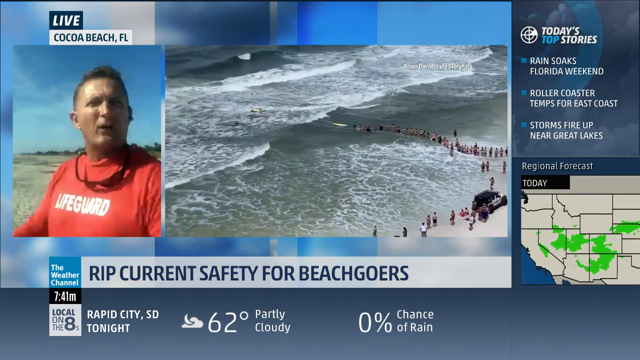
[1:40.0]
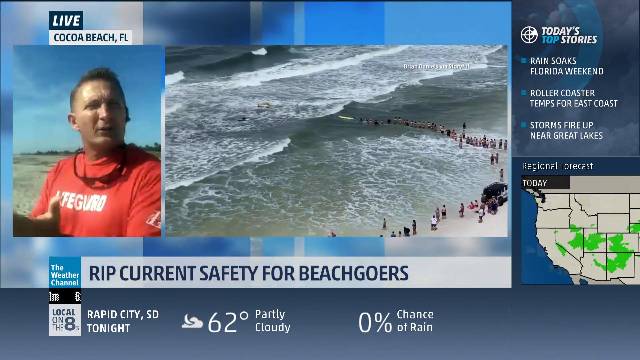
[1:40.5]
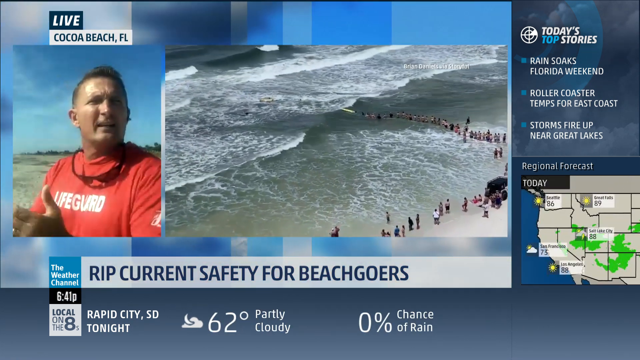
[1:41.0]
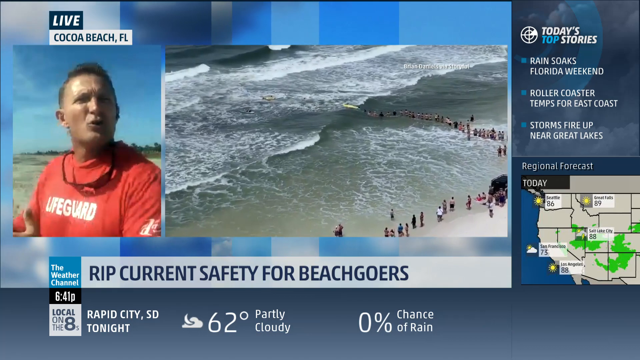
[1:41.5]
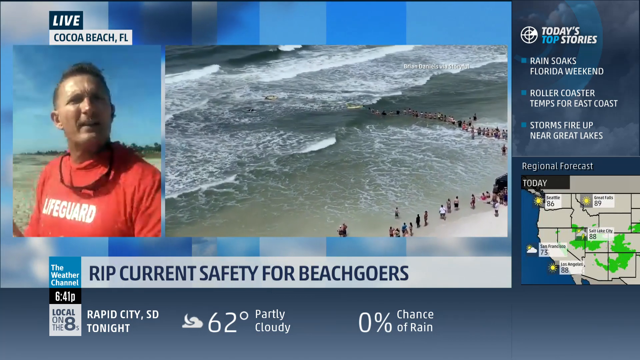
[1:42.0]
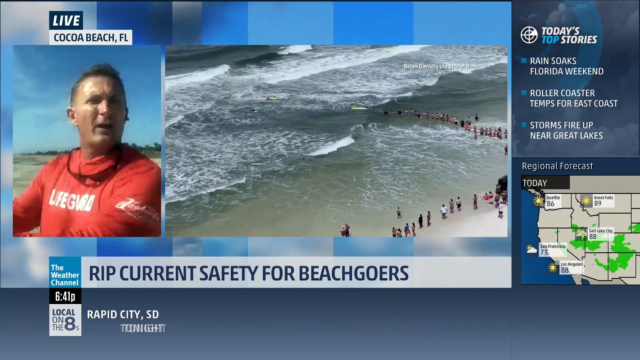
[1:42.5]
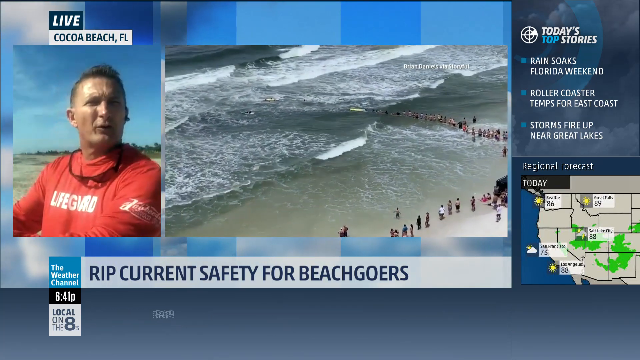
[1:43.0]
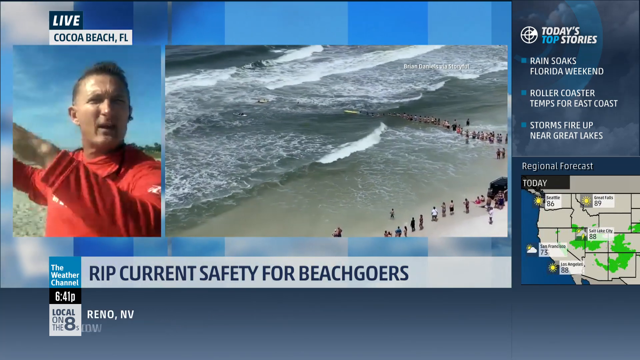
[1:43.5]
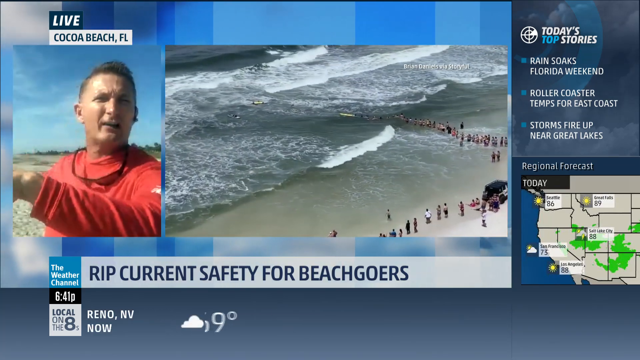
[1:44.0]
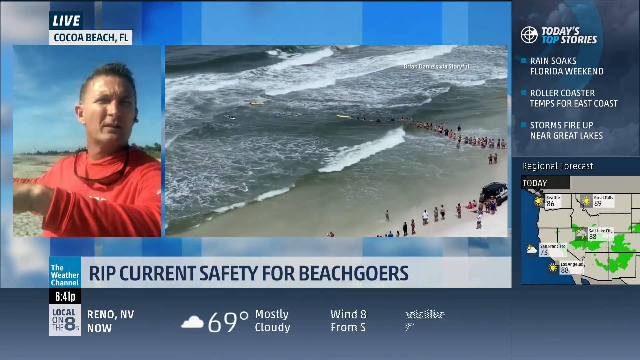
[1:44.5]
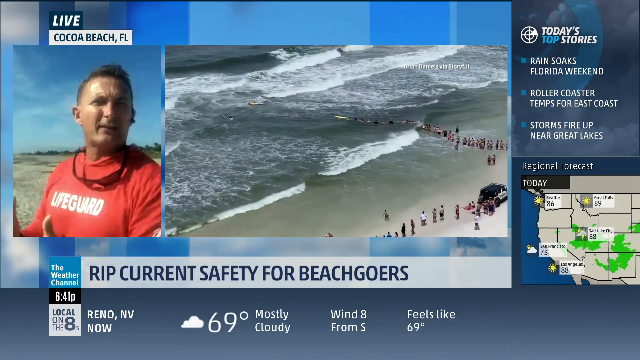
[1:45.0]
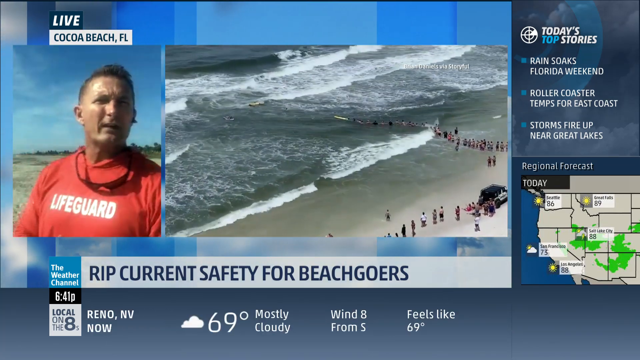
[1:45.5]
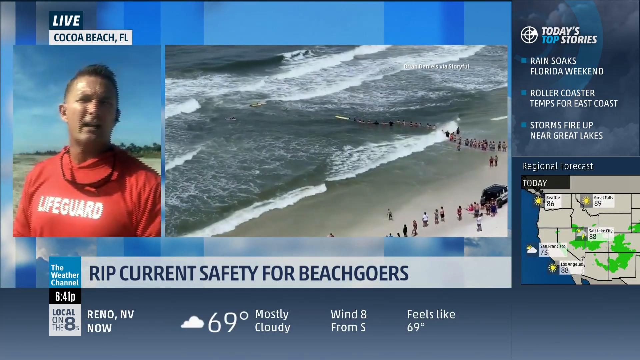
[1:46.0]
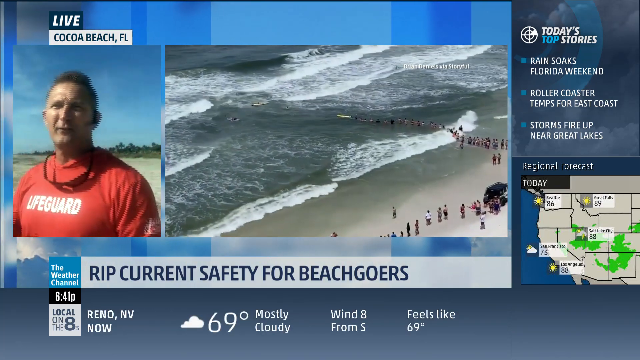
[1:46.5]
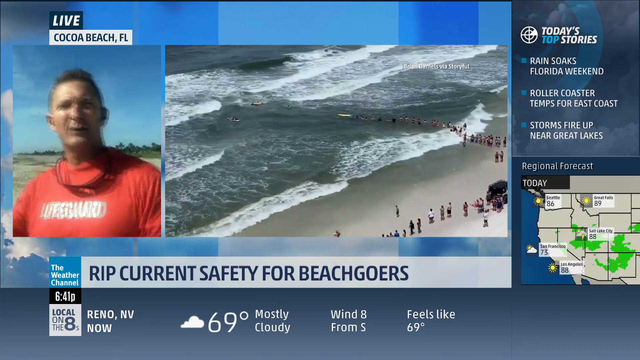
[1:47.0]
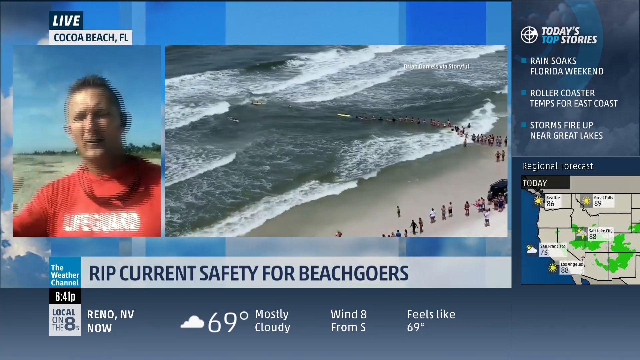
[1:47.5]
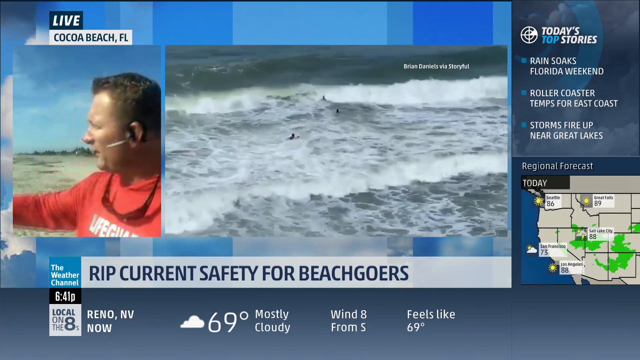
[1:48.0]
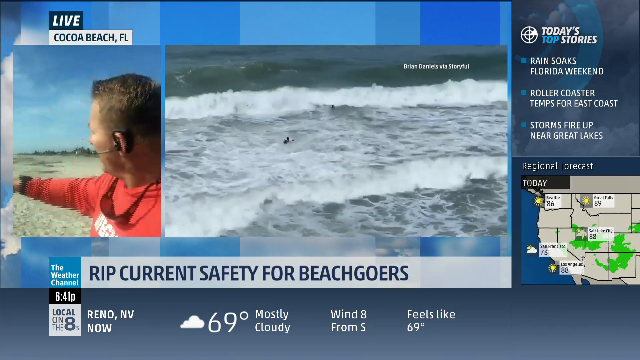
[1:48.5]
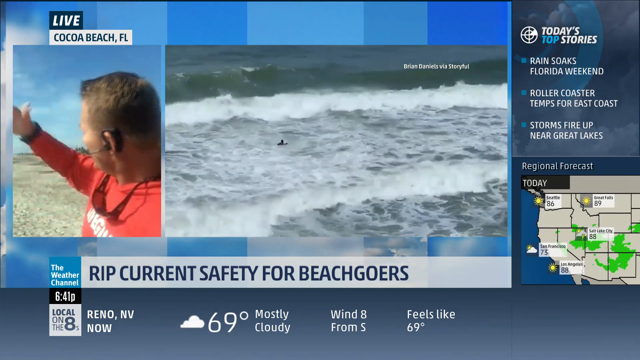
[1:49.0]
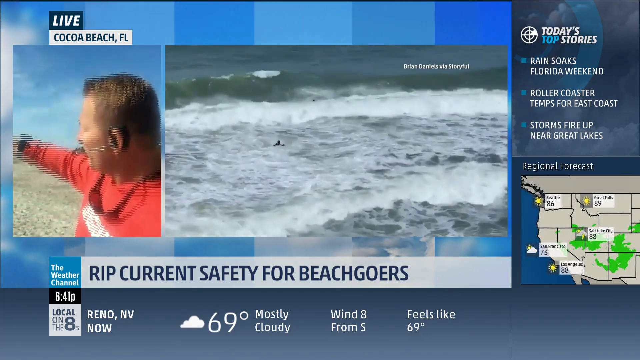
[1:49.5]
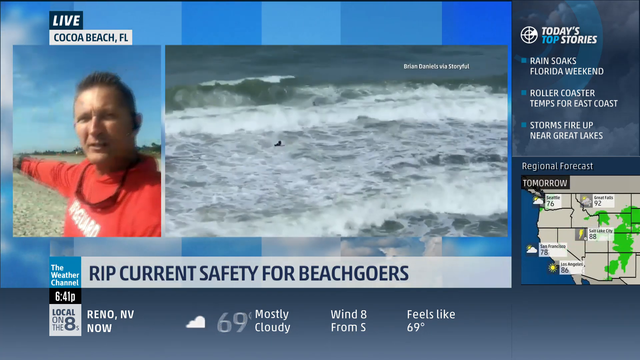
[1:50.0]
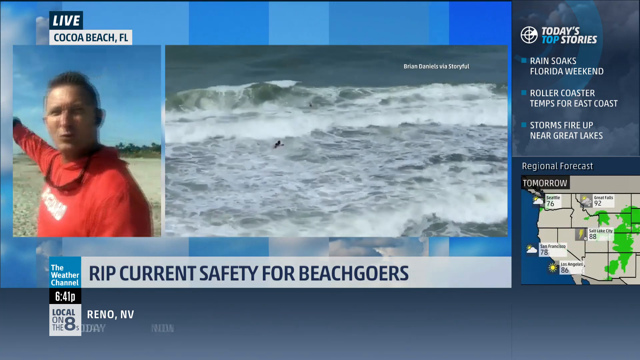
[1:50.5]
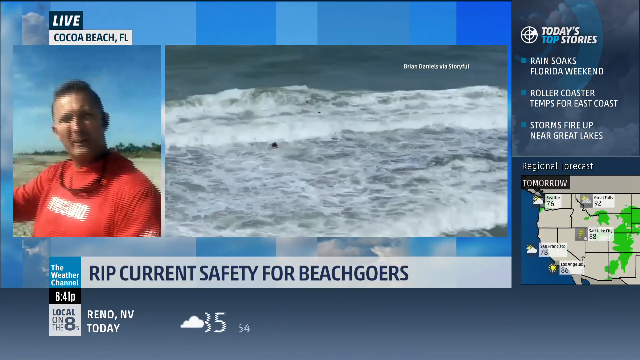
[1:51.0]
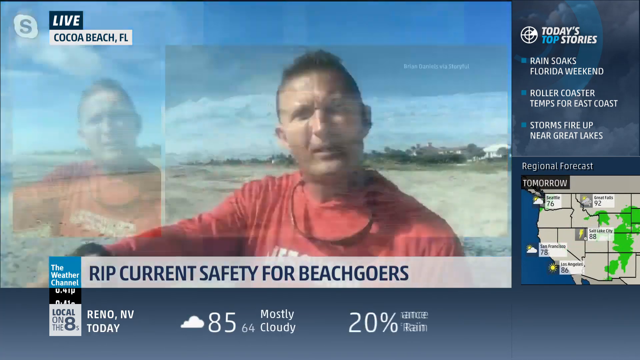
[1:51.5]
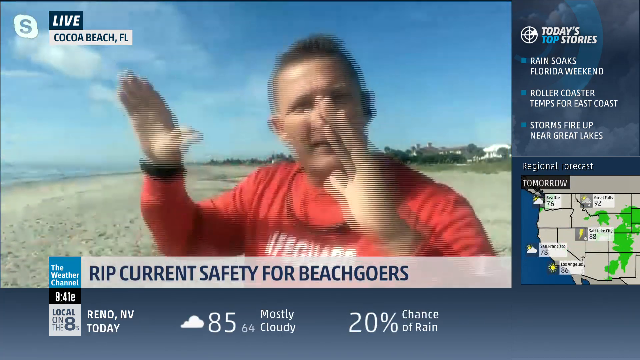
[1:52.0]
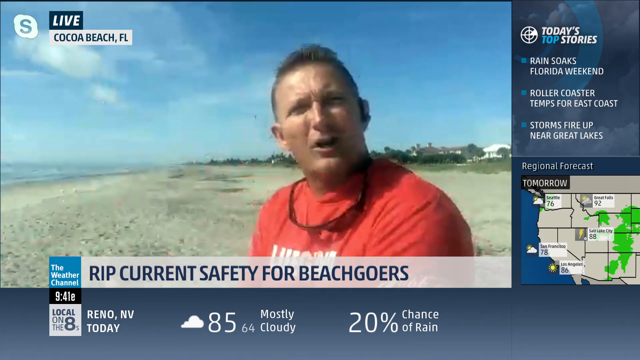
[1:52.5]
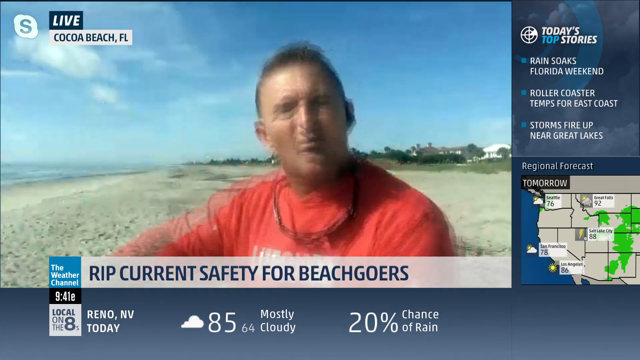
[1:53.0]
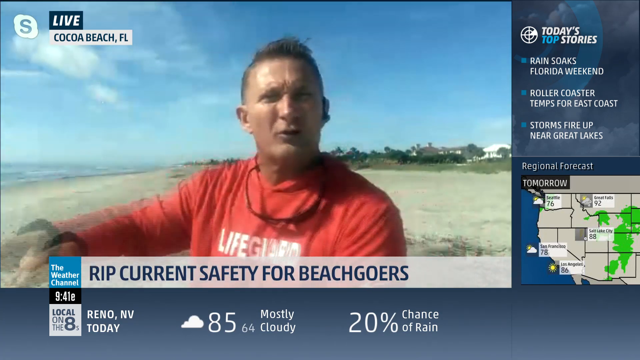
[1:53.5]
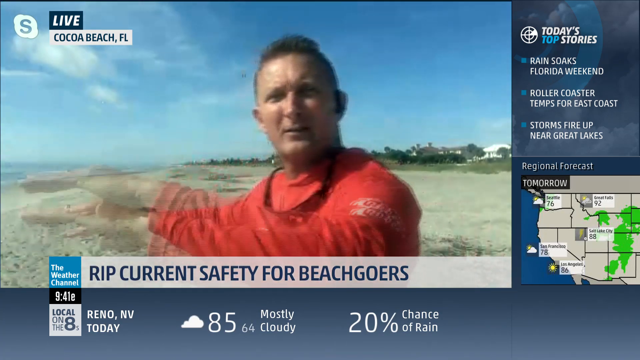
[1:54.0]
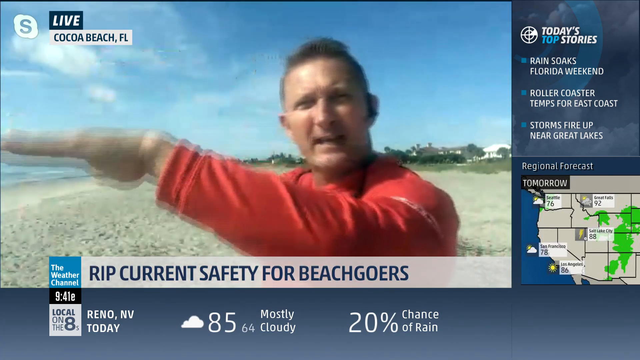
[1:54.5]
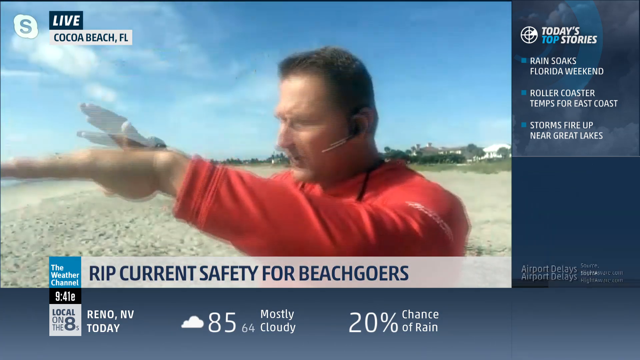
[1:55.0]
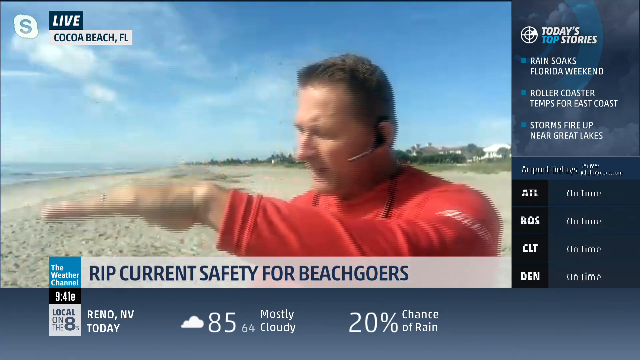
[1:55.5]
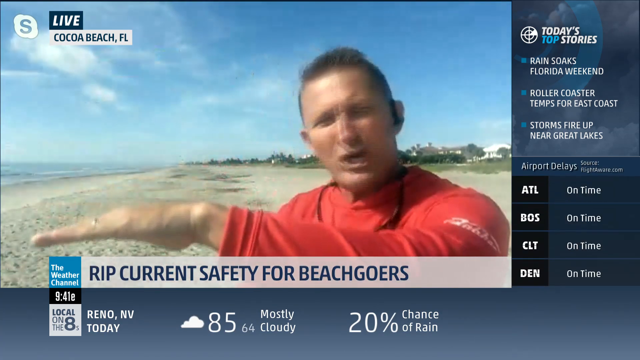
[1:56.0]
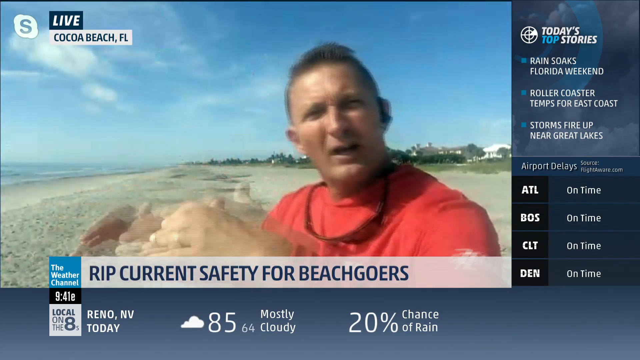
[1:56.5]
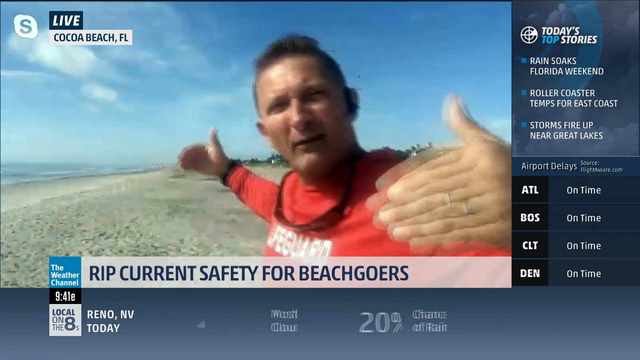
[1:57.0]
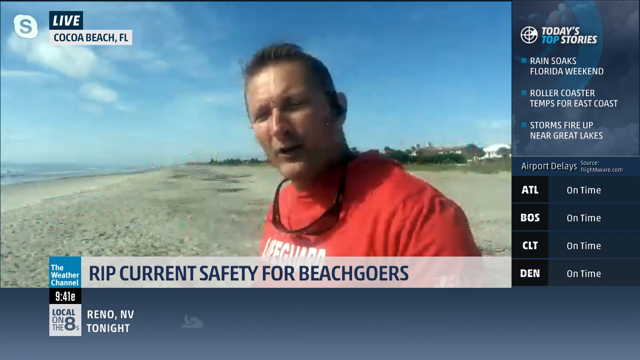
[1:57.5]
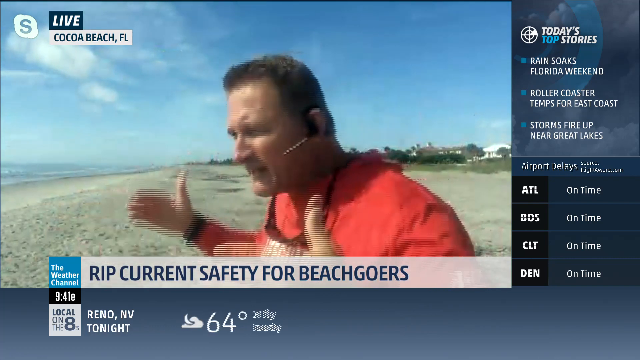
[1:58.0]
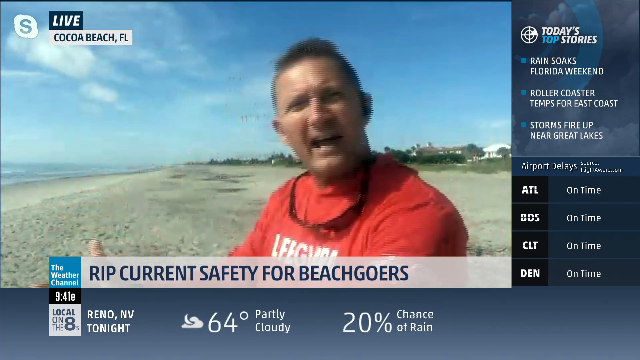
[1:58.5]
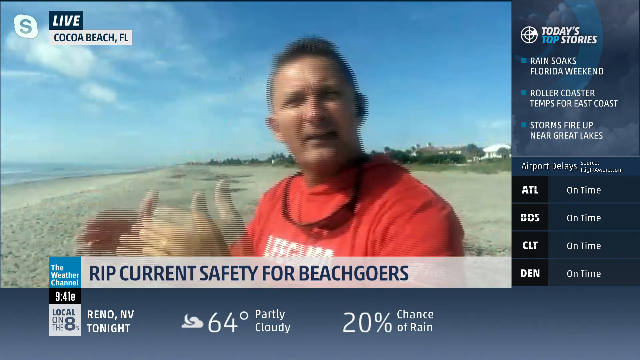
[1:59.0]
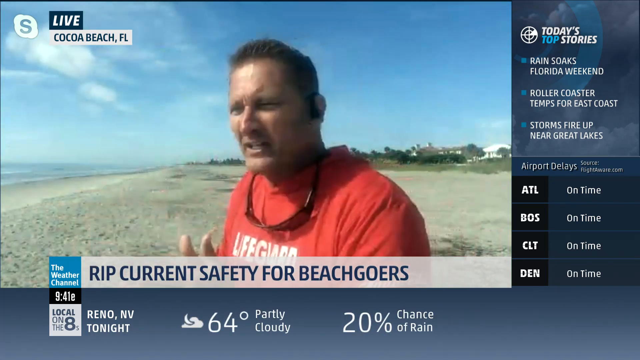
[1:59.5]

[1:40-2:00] A human chain tries to rescue people caught in the rip current, while a line of people on the beach watches the rescue. In a split screen, the lifeguard appears on the left, being interviewed live at Cocoa Beach, Florida; he explains with his hands the flow of the water and how a rip current forms. The beach behind him is empty and he is the only one in view until the split screen, which shows the row of people doing the human chain rescue. On the right side, today's top stories are listed: "rain soaks Florida weekend," "roller coaster temps for East Coast," and "storms fire up near Great Lakes."